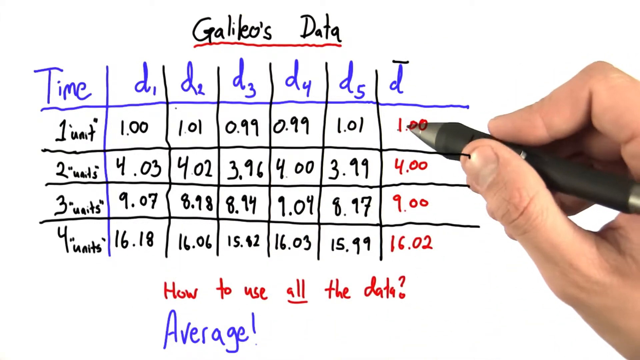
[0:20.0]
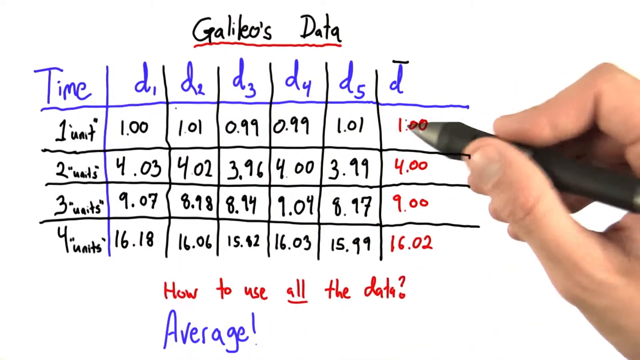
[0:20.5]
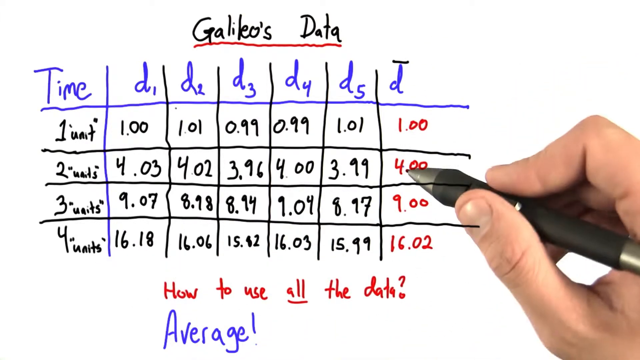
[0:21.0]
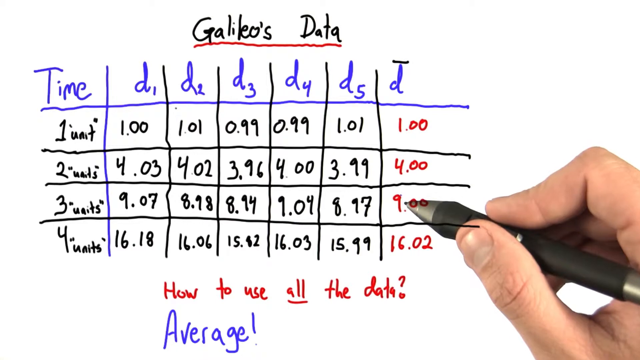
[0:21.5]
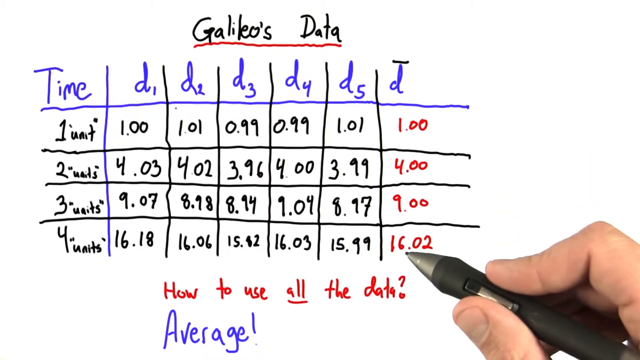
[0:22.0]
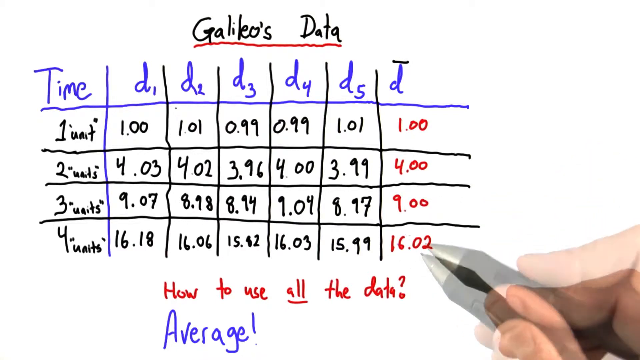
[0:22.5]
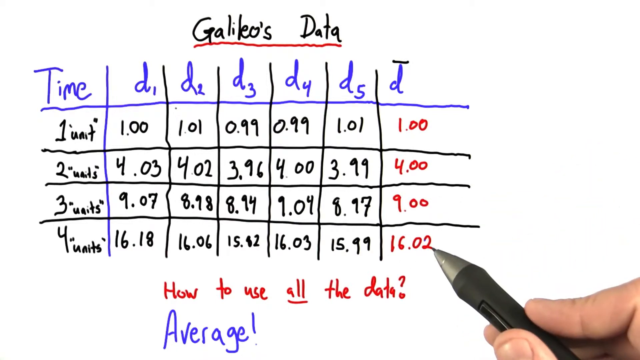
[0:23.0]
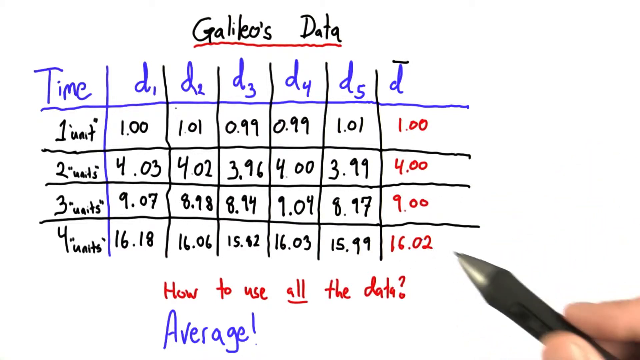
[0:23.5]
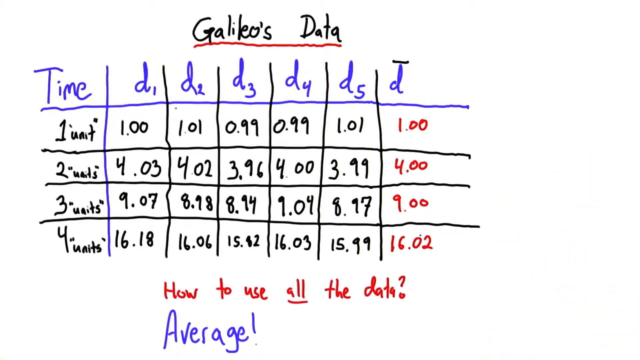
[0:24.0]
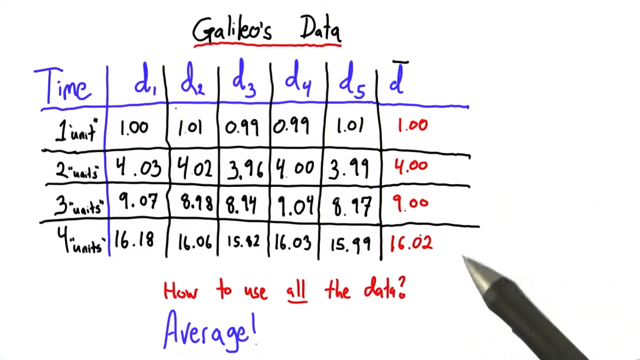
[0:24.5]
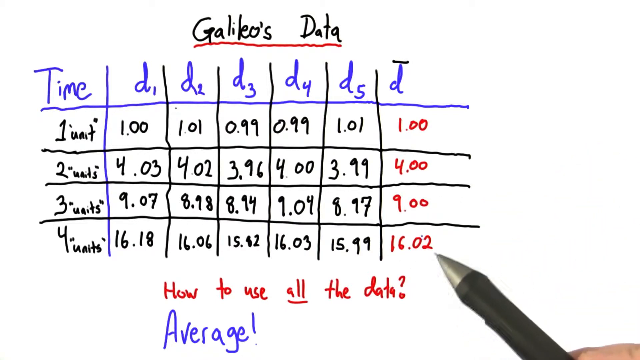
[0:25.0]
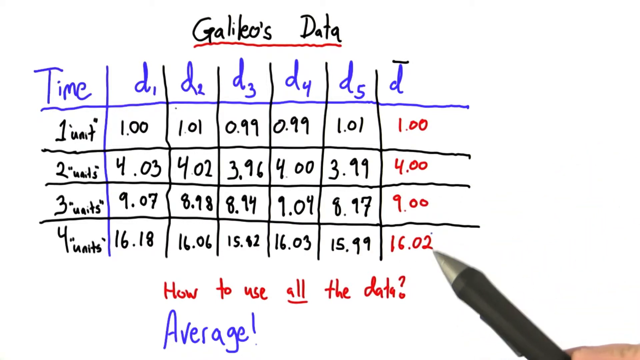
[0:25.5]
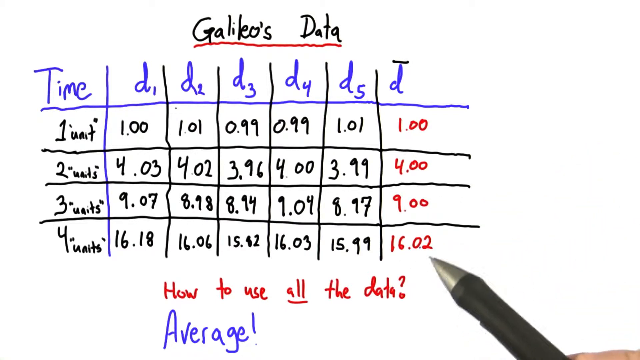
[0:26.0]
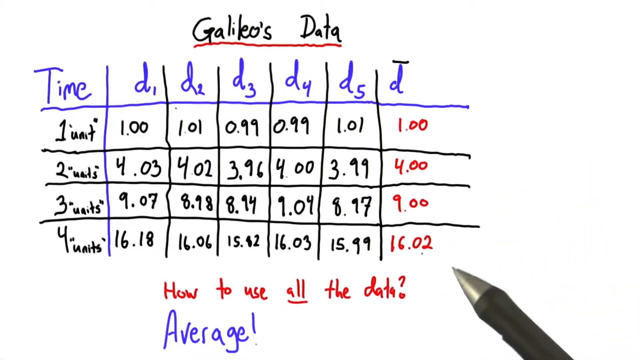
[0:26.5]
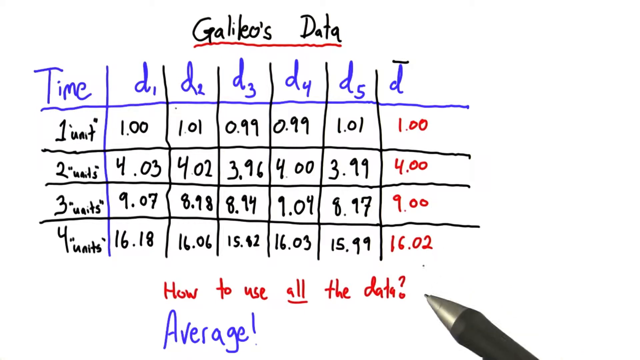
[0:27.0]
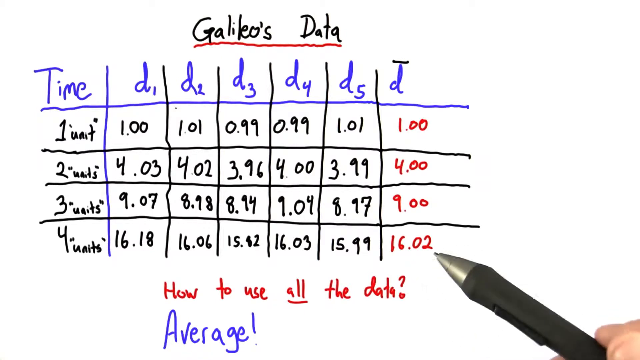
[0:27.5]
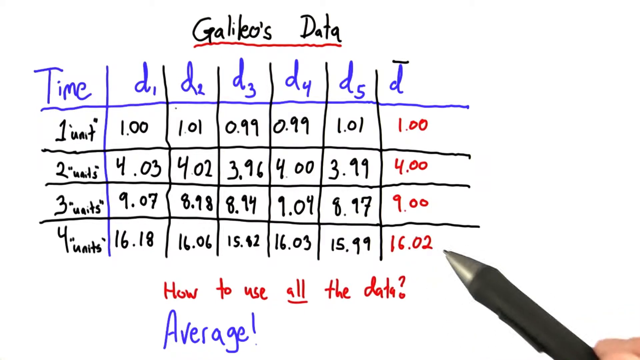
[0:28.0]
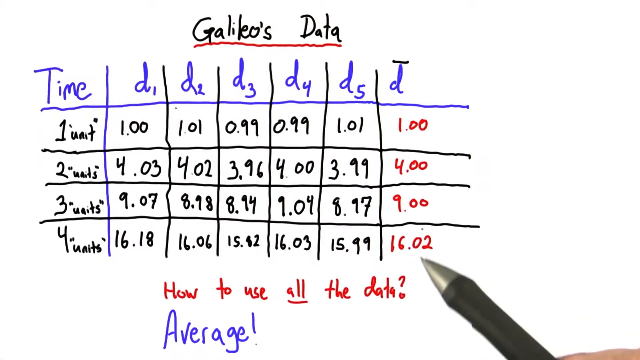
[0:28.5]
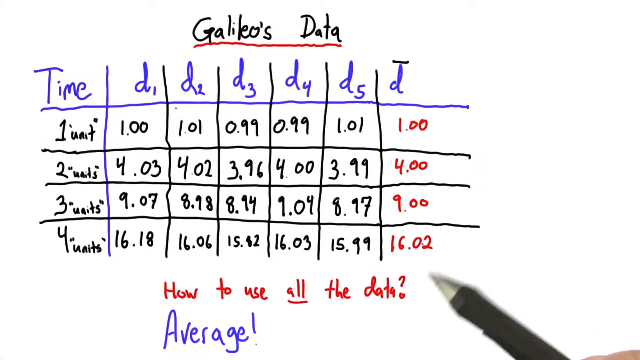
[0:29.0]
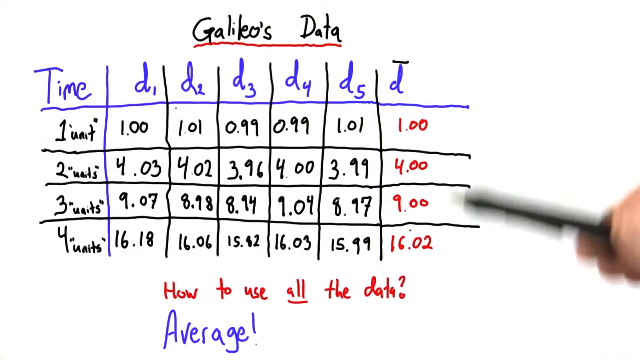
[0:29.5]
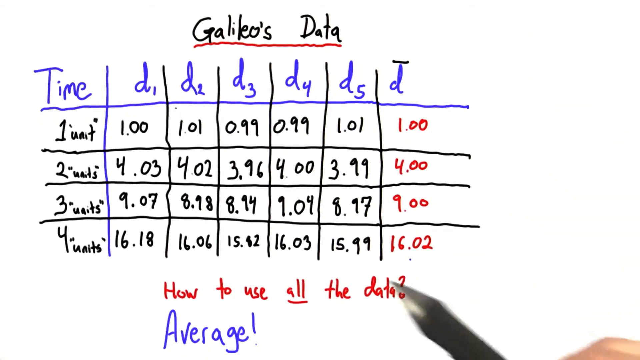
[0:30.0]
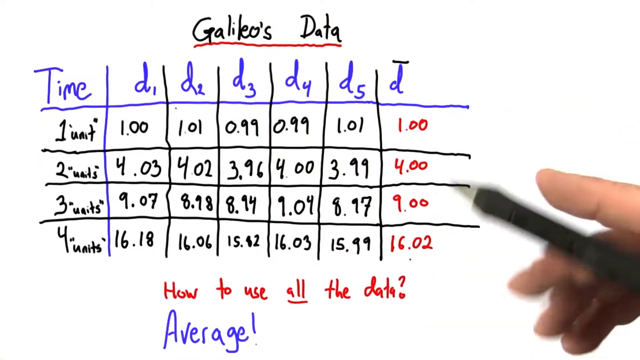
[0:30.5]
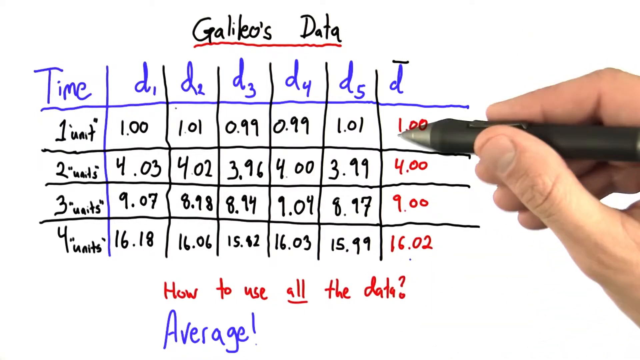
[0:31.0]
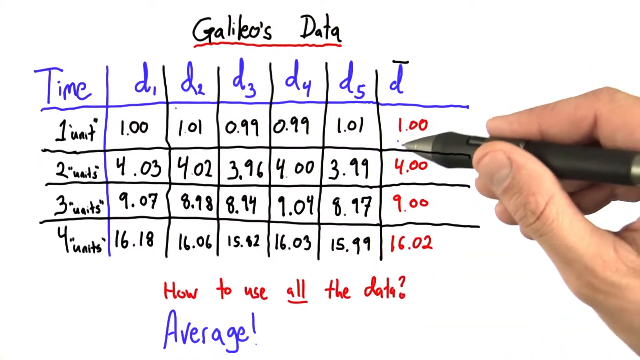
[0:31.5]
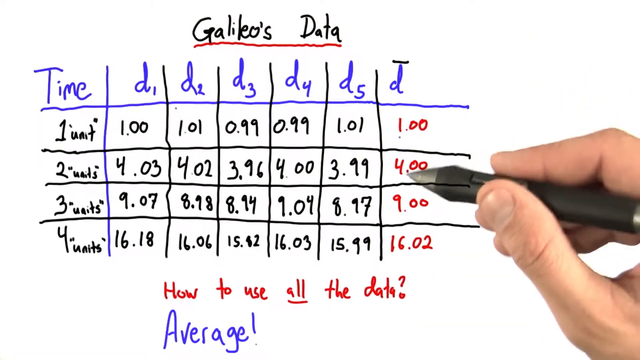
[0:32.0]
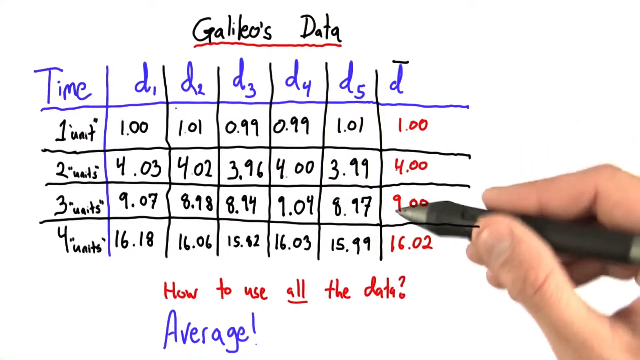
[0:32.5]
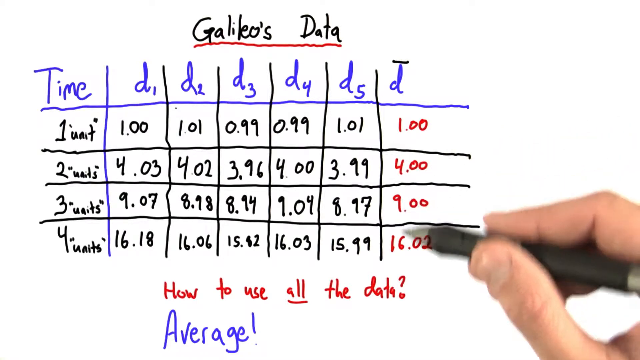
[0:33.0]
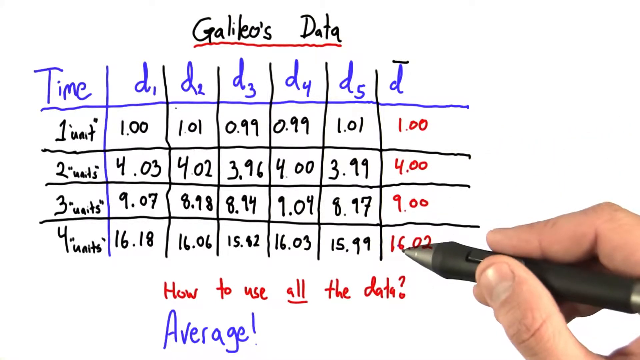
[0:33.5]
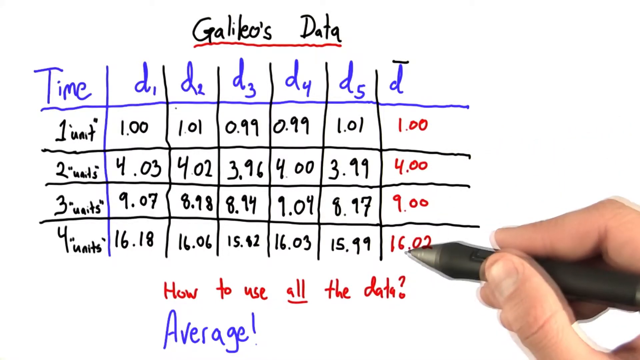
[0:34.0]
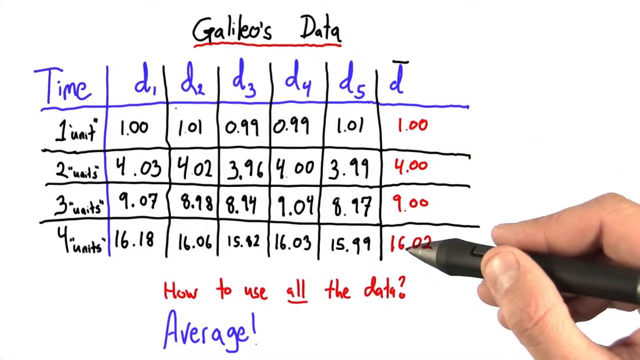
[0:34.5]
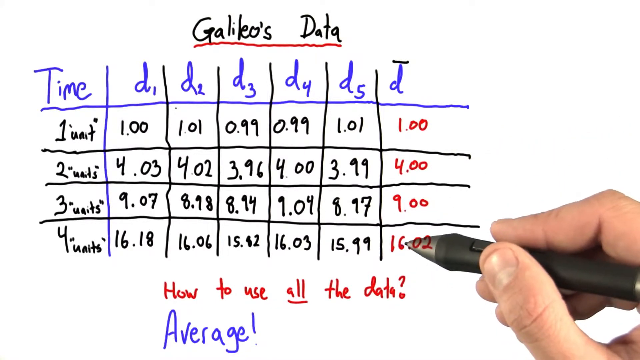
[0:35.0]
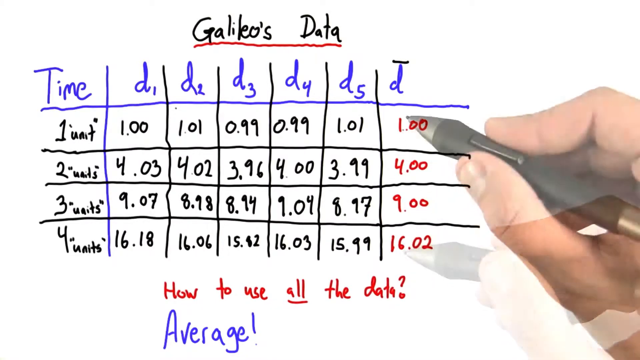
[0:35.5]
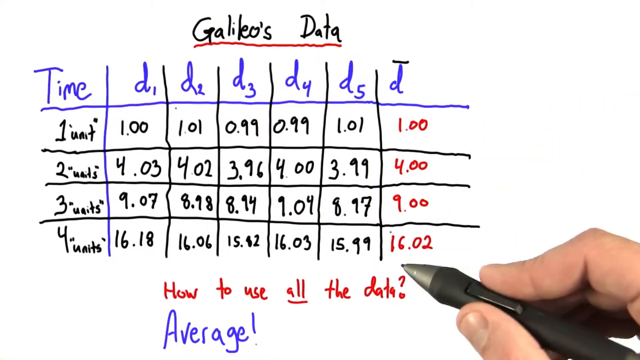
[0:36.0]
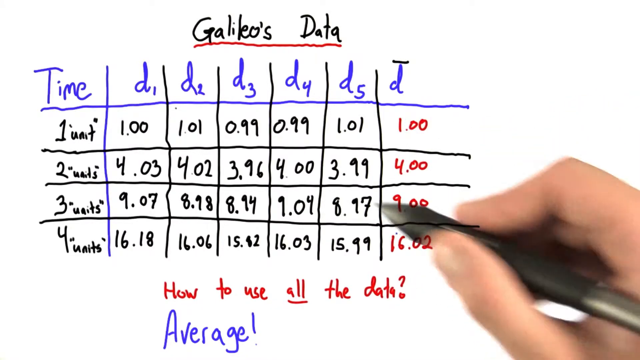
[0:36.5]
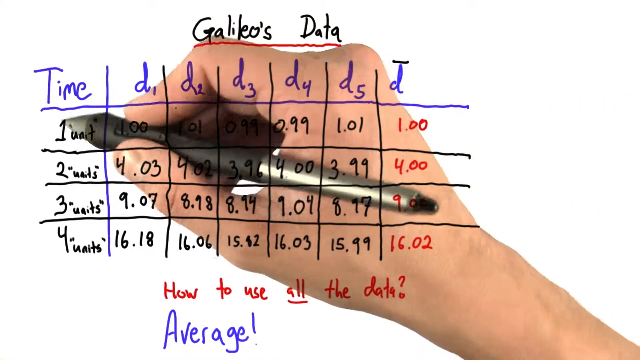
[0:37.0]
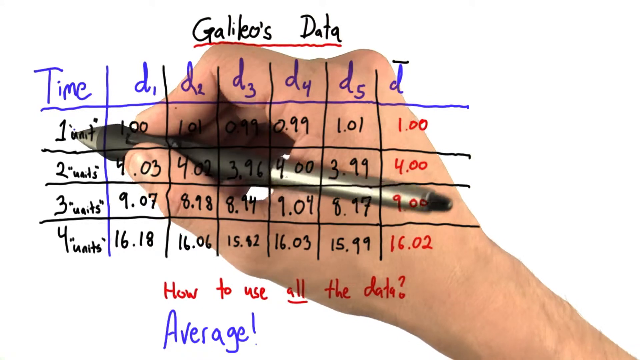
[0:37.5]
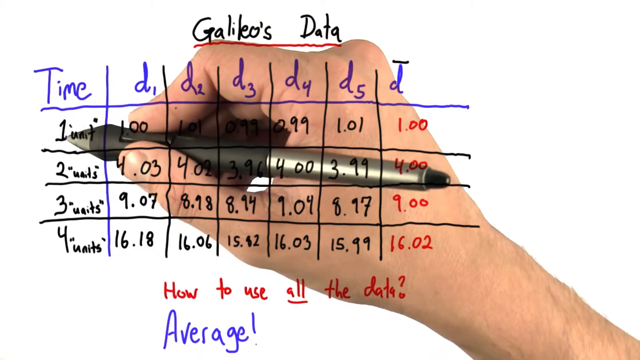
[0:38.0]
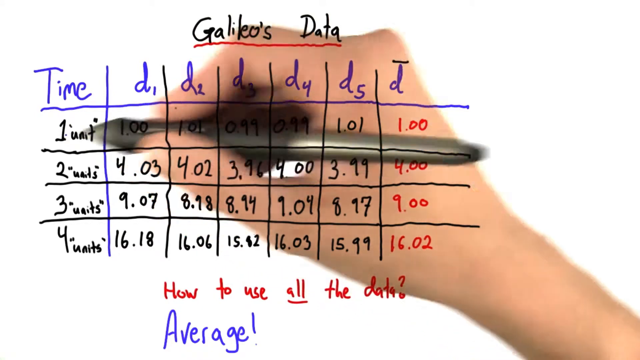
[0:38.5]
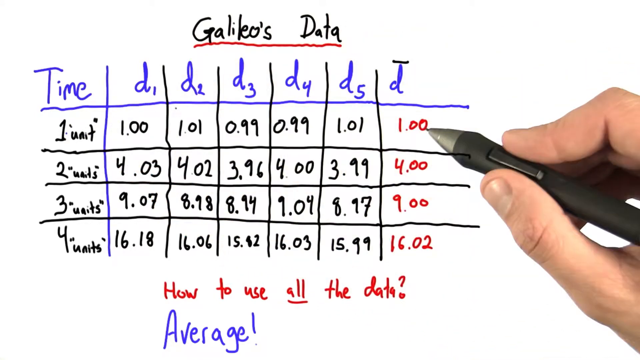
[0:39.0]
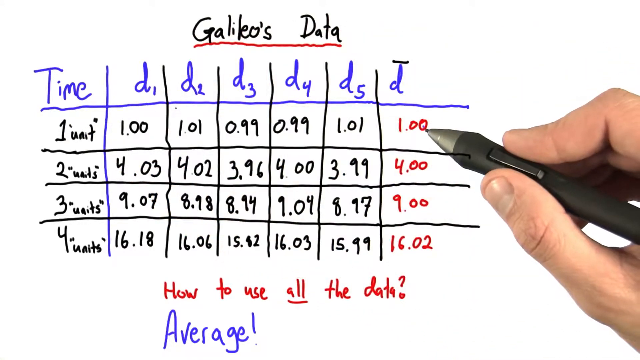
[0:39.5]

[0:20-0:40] The table now has averages written in red, in contrast to the data and the time segments shown in blue. The person behind the camera goes through each average individually, pointing out each value in detail and showing how it is brought down to the nearest whole number. On the first line the average is 1, presumably in seconds. On the second the average is 4, and on the third the average is 9 even though the times differ considerably. On the fourth, despite big differences between the numbers, the result is brought down to 16.02, with D3 being a bit lower than the other results.